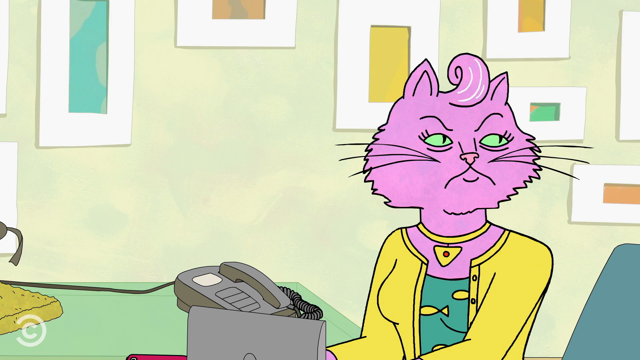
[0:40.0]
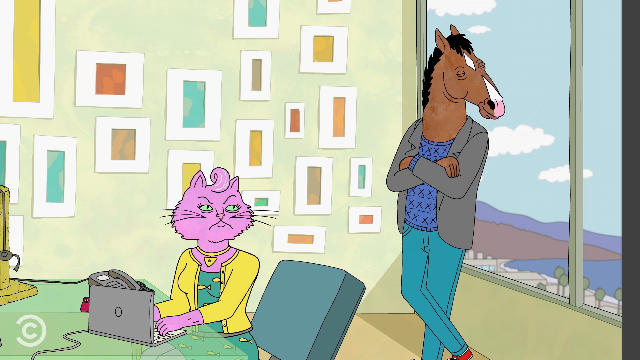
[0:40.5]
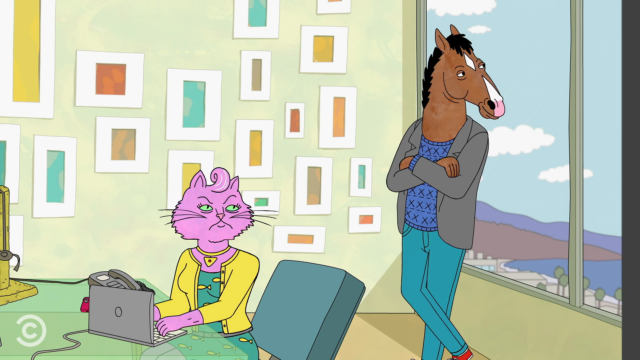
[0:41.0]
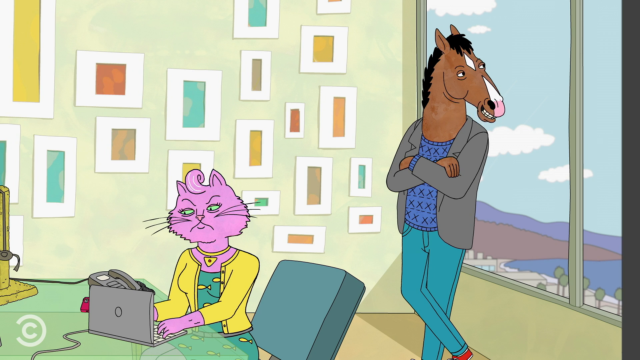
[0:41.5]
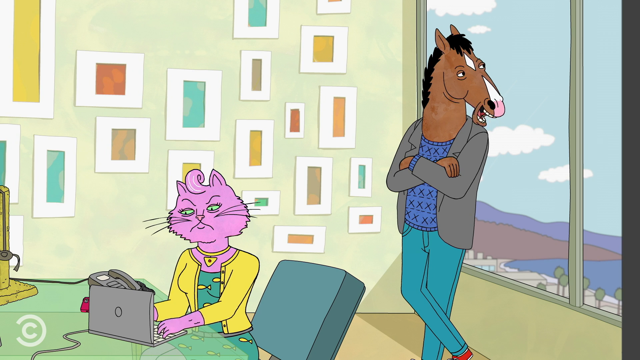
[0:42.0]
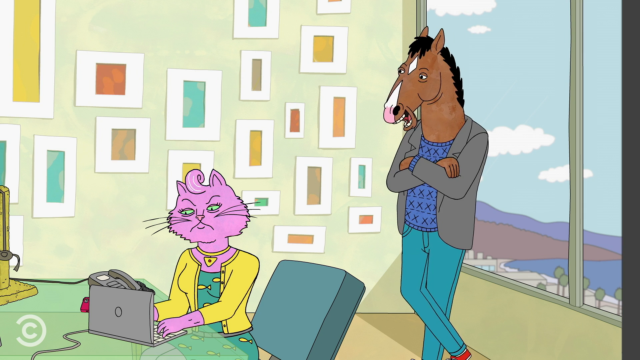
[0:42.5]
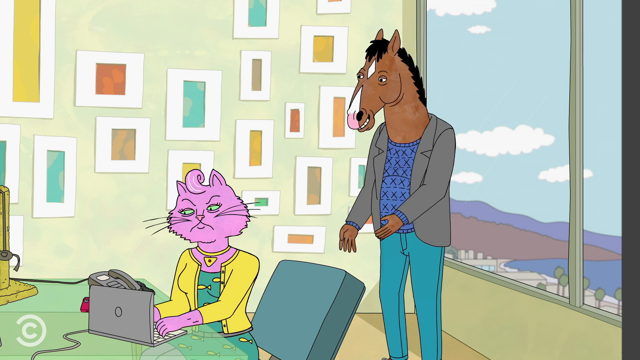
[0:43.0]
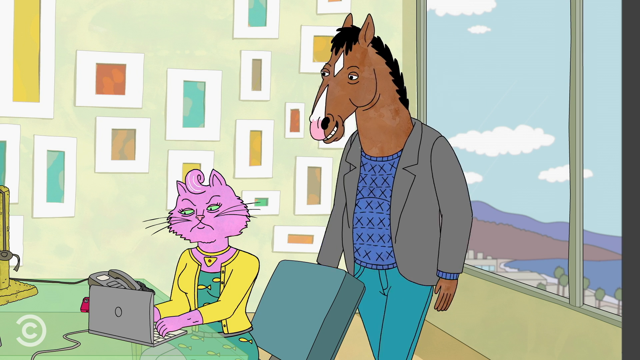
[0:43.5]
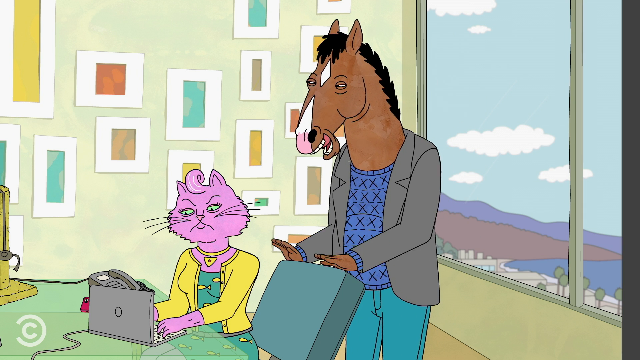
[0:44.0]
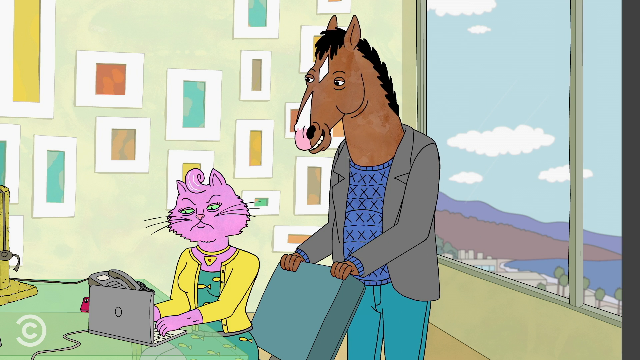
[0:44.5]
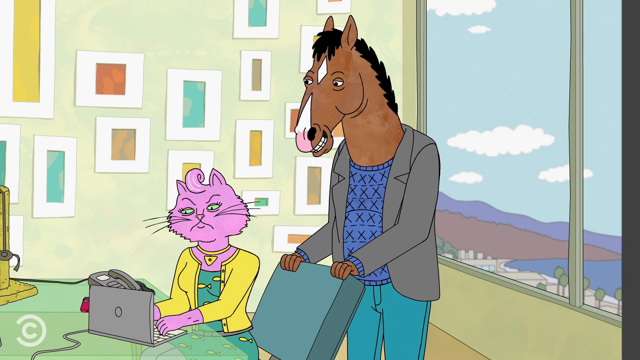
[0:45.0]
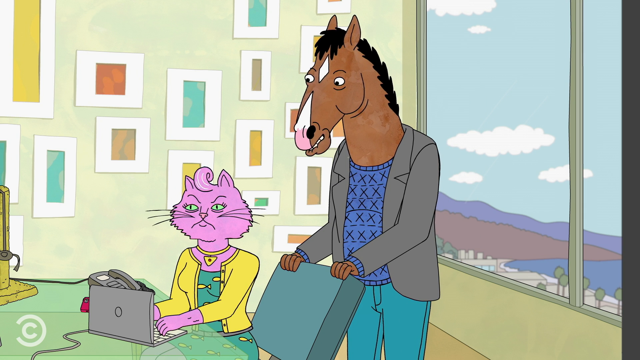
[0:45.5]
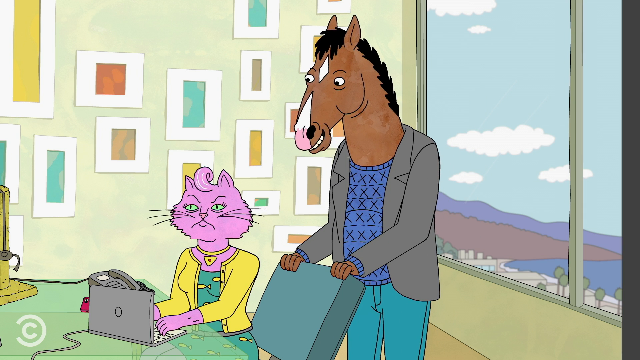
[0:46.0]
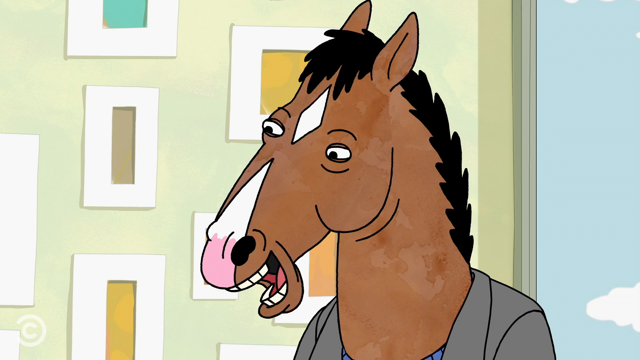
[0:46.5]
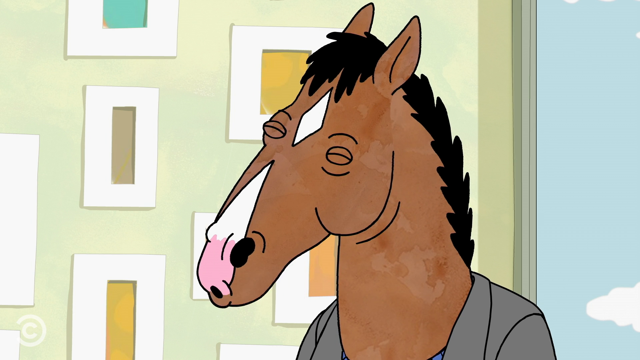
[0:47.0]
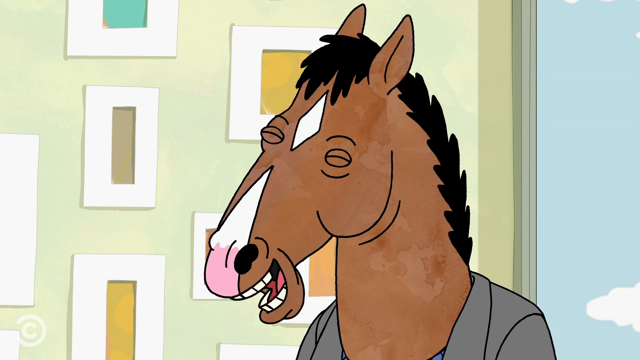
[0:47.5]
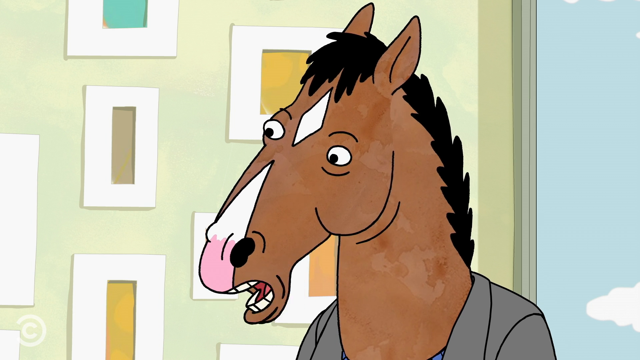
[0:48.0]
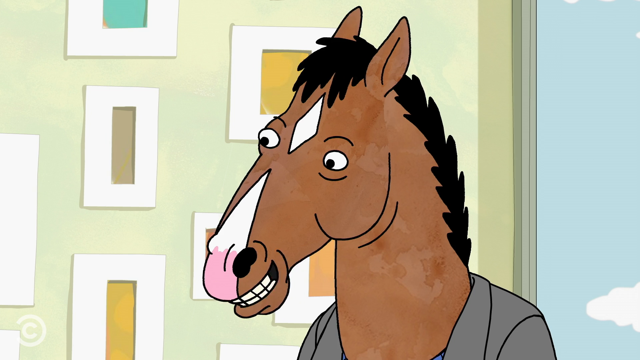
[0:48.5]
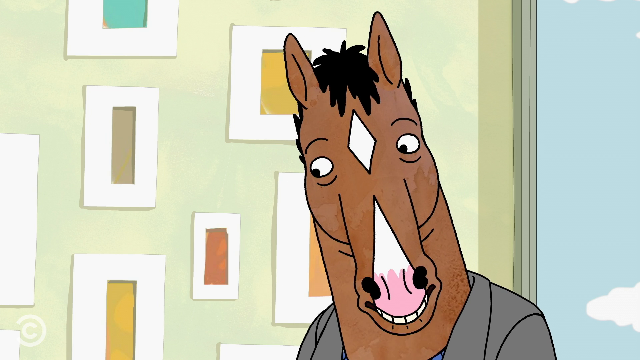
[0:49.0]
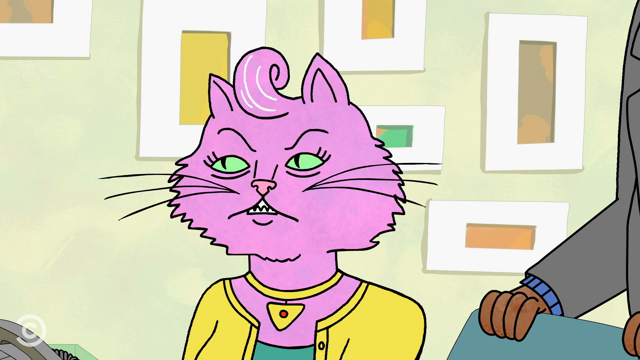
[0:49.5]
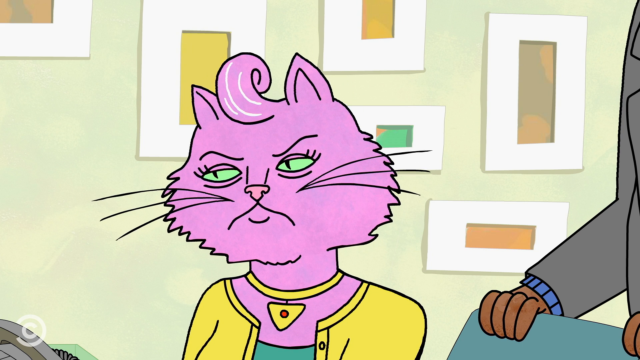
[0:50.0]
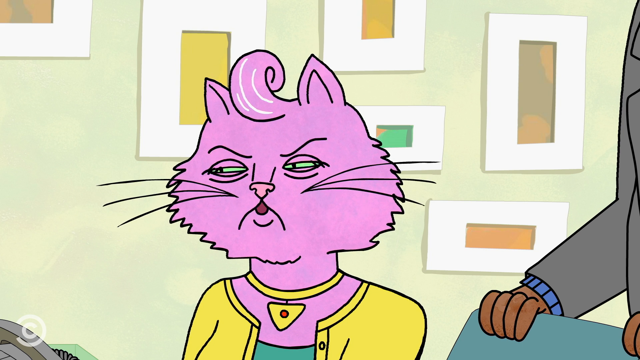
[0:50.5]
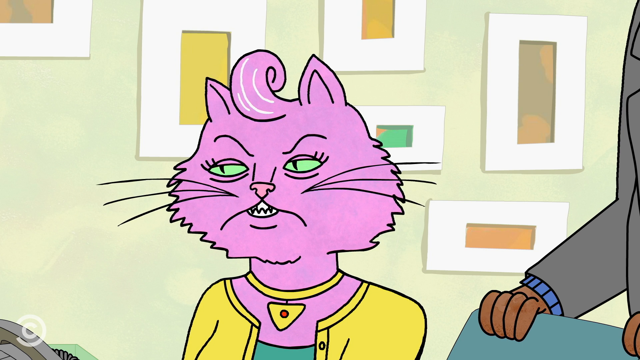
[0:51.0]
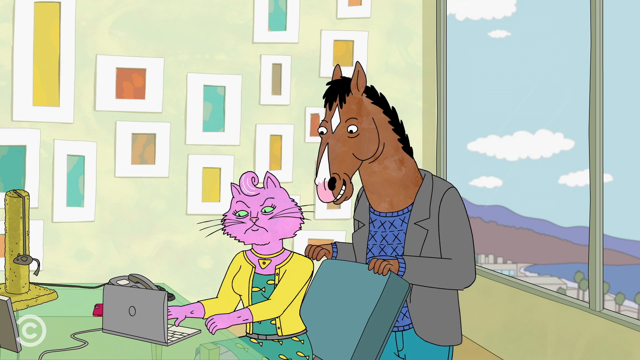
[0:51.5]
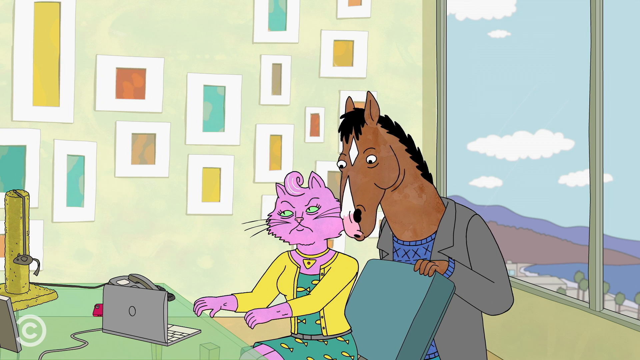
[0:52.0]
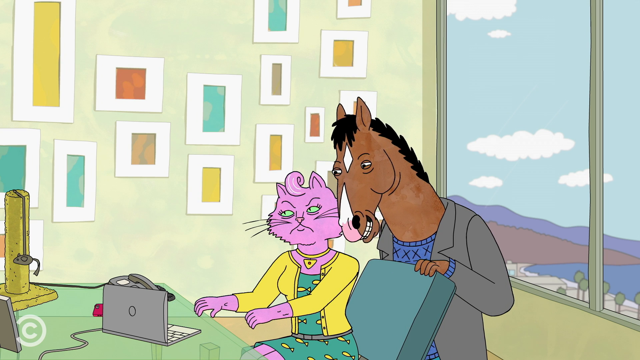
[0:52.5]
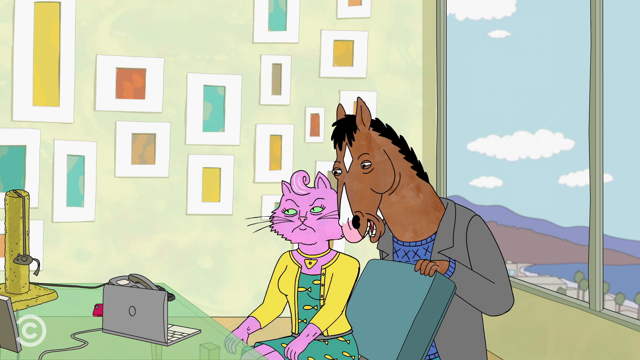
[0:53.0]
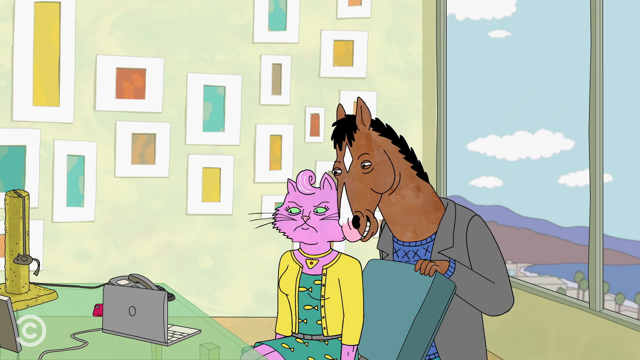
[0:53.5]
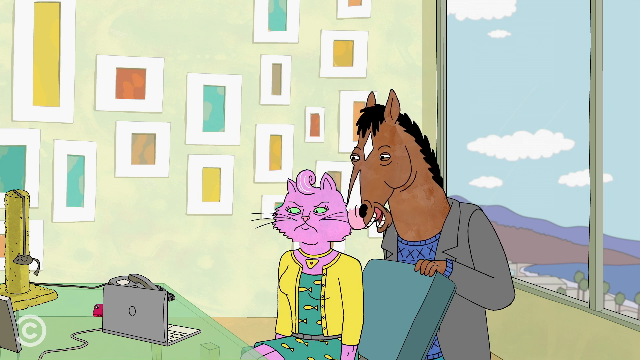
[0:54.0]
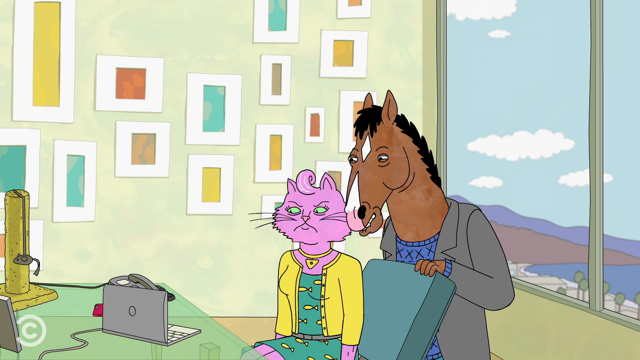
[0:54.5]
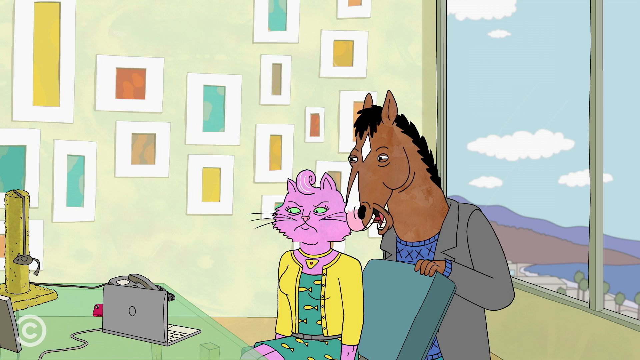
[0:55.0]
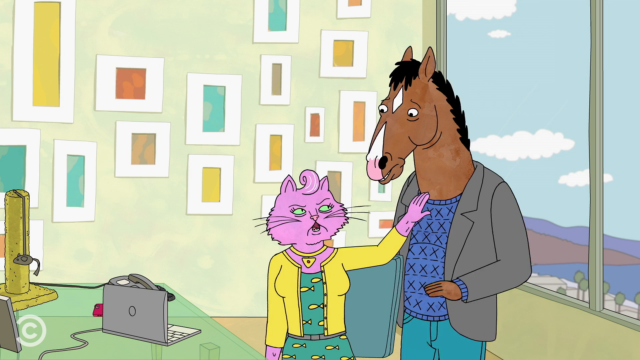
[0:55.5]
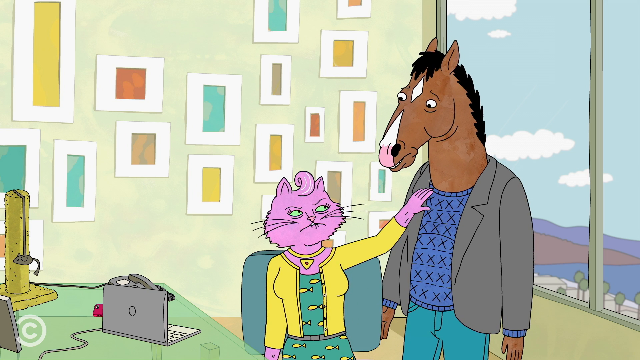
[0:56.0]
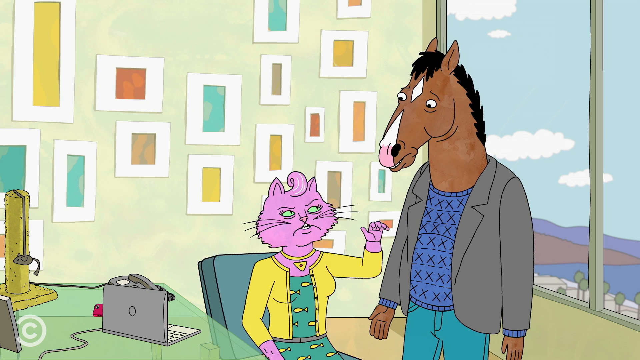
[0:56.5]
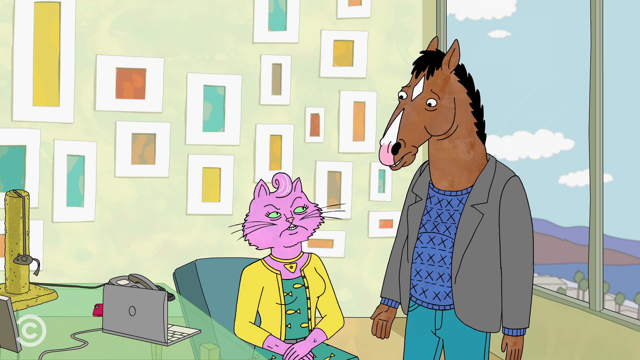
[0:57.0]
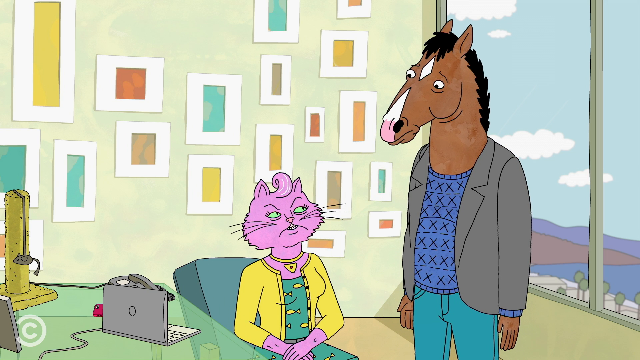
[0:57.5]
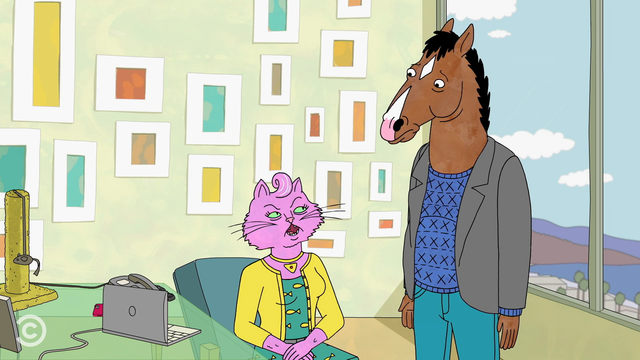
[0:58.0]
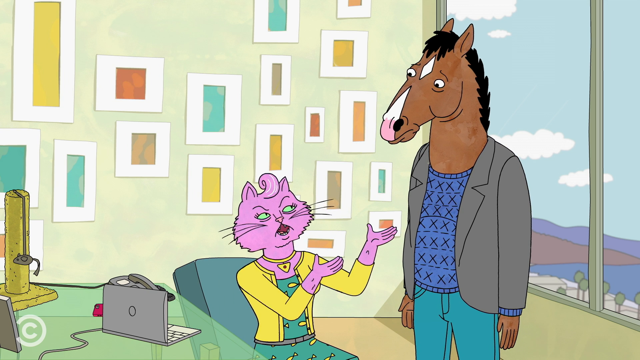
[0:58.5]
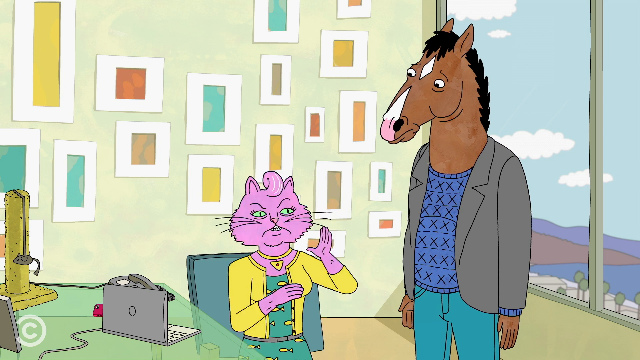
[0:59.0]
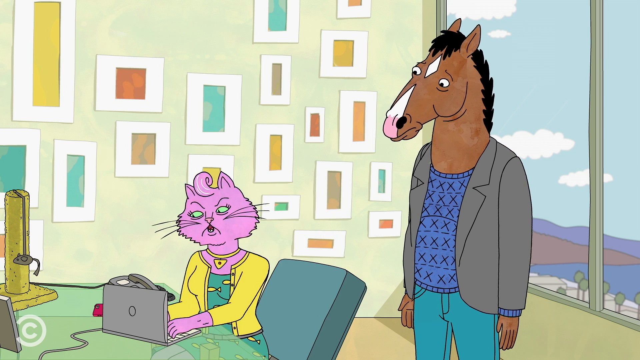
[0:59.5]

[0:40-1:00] The horse stands in front of the window looking out, while the cat has her head turned away from him, looking at her laptop. The horse talks, turns to look at the cat, walks behind her and puts his hands on the back of her chair while she keeps looking at the laptop. She looks up, and a close-up shows the horse talking as he turns his head to look at her. Another close-up shows her looking a bit angry and closing her eyes as she replies. The camera pans back to her and the horse. He grabs a chair and pulls her away from the table toward him, leaning down beside her left ear. The cat puts her hands down beside her and looks angry, then turns to look at the horse and raises her left hand, putting it on his chest. He stands up looking shocked. She turns around fully to look up at him and puts her hand back down. The horse stands up; the cat looks at him, raises both hands pointing them toward him, then turns back to the laptop.